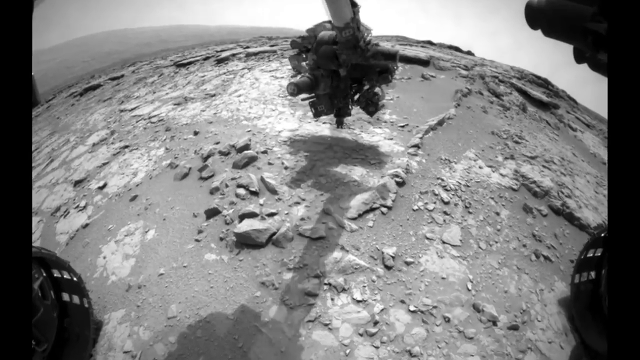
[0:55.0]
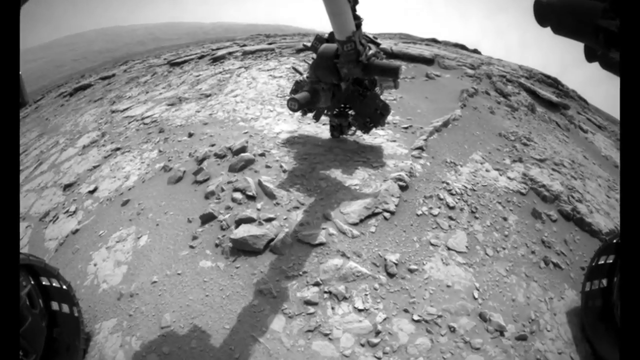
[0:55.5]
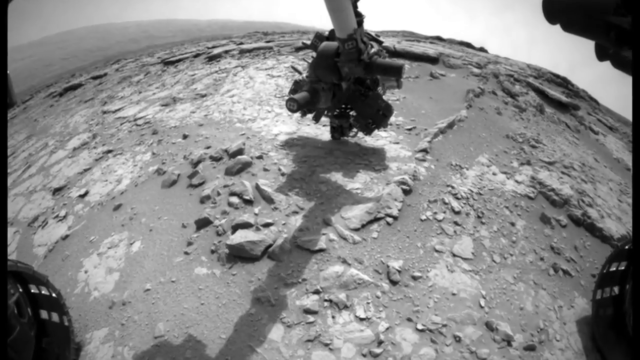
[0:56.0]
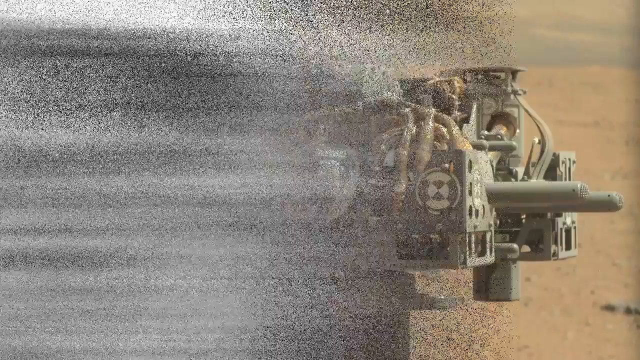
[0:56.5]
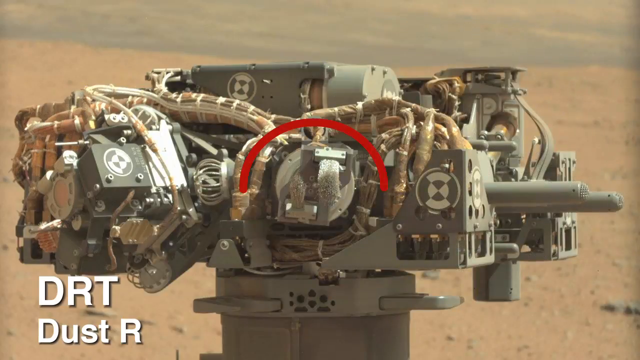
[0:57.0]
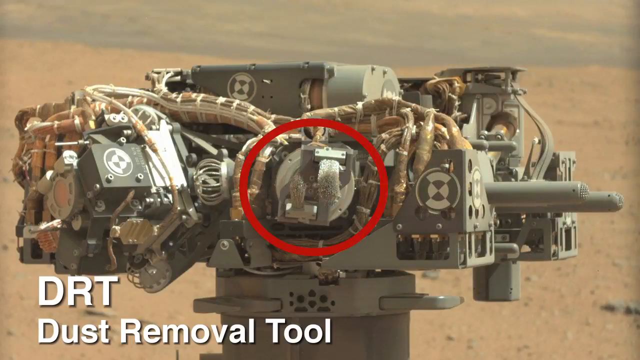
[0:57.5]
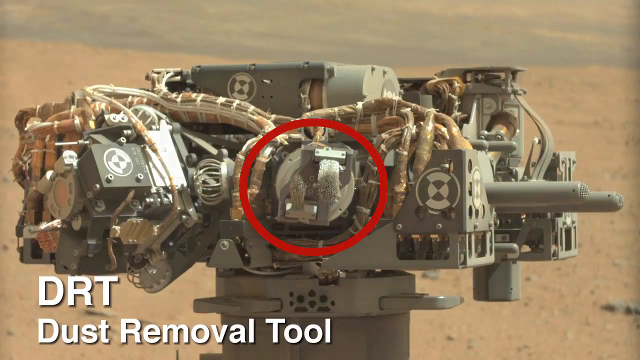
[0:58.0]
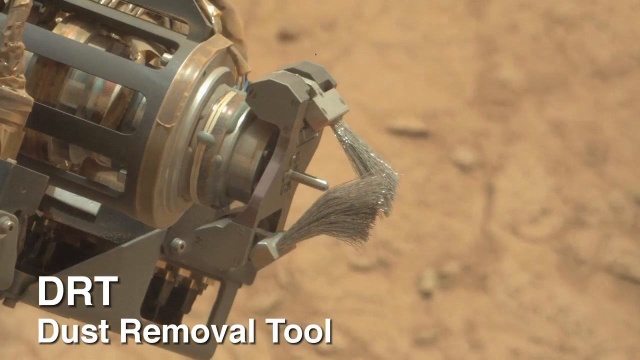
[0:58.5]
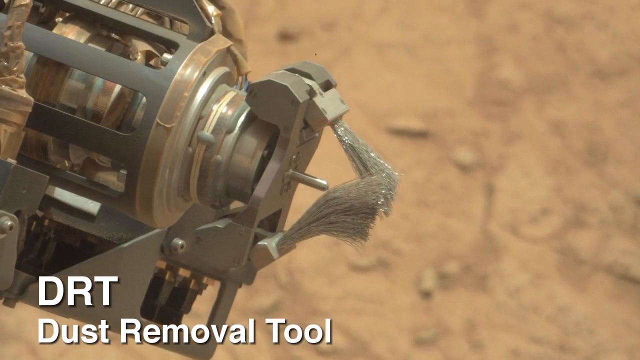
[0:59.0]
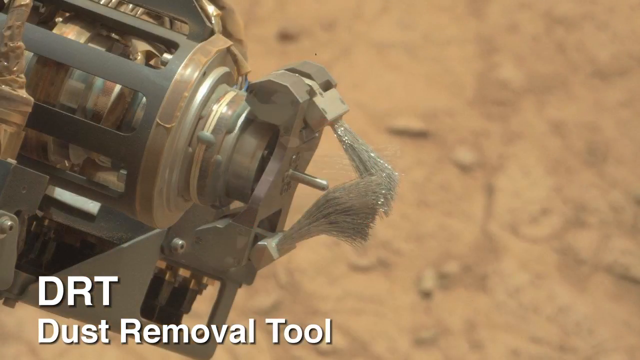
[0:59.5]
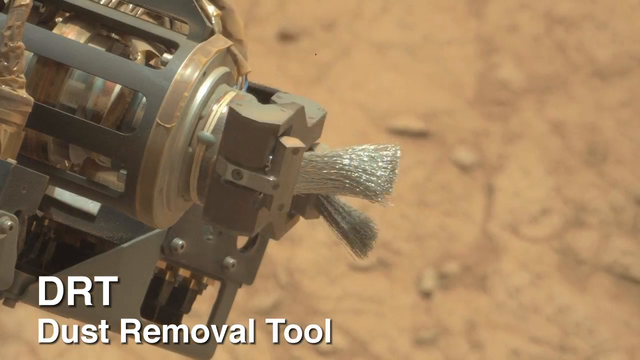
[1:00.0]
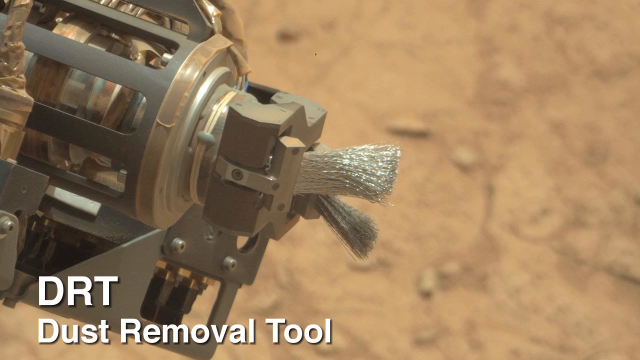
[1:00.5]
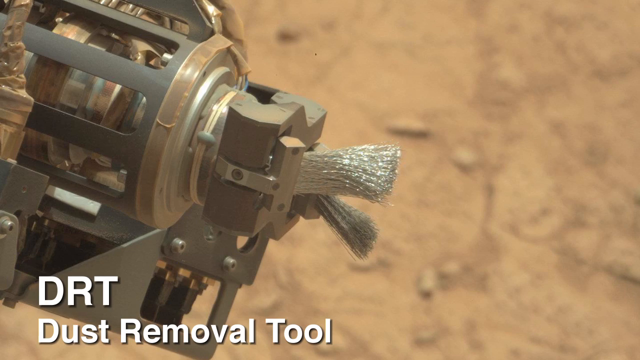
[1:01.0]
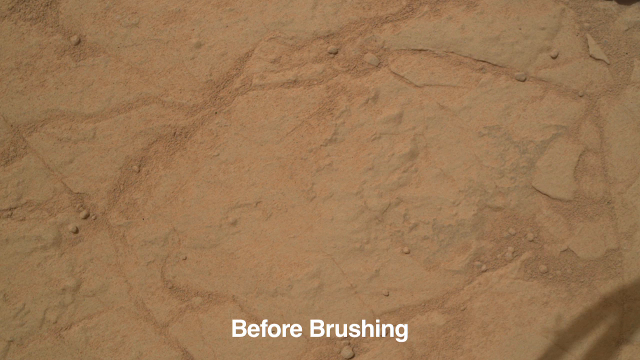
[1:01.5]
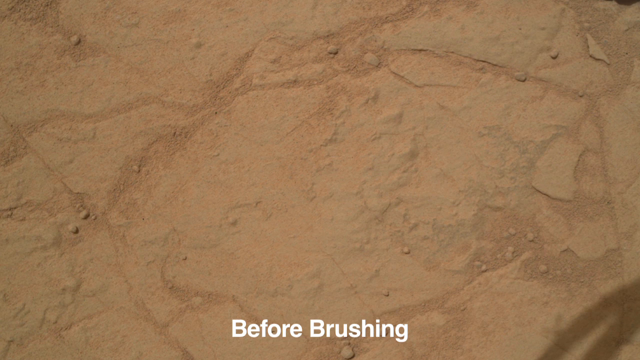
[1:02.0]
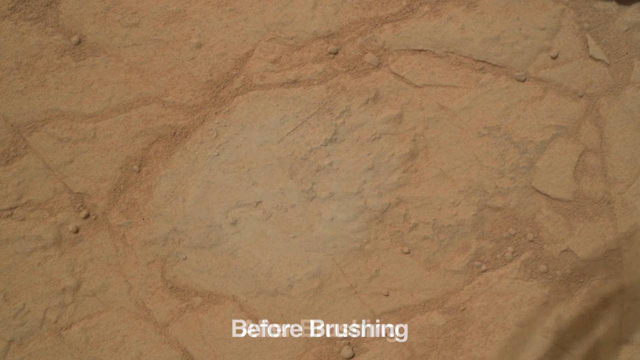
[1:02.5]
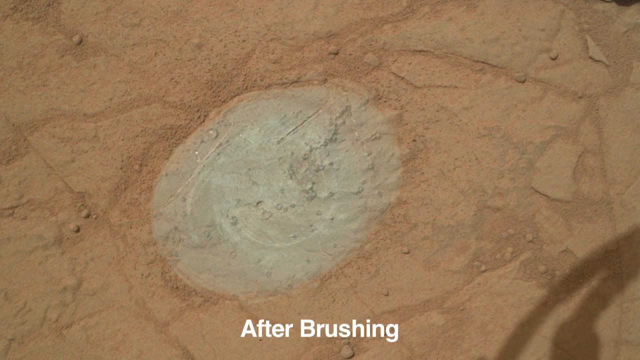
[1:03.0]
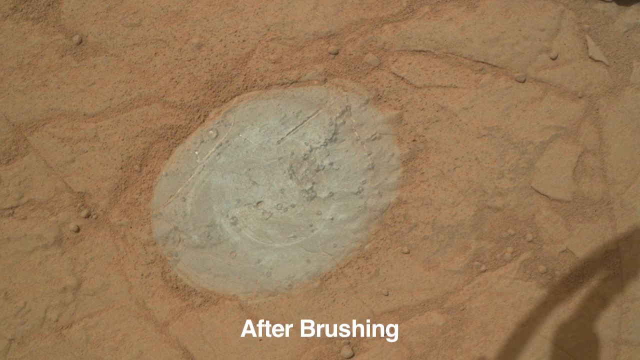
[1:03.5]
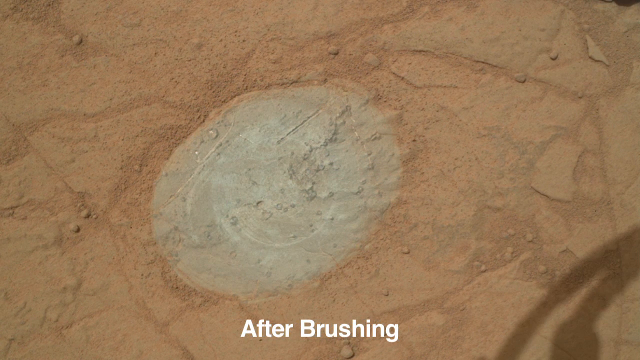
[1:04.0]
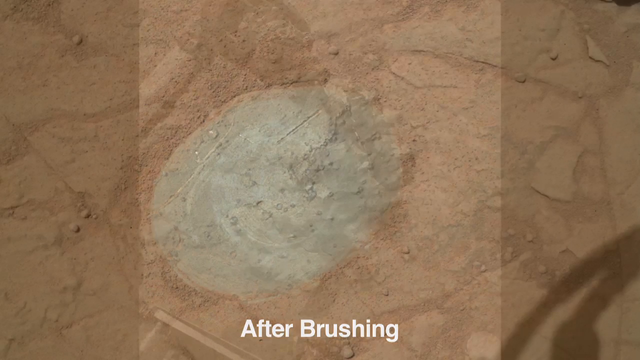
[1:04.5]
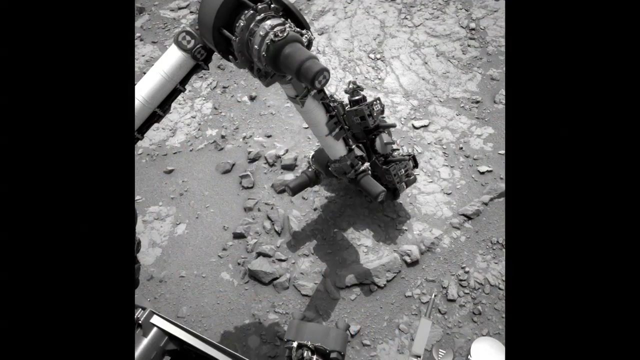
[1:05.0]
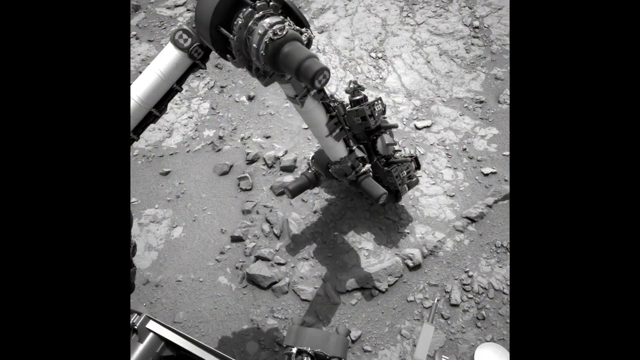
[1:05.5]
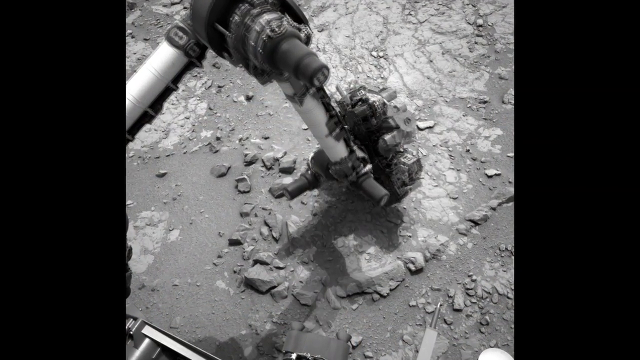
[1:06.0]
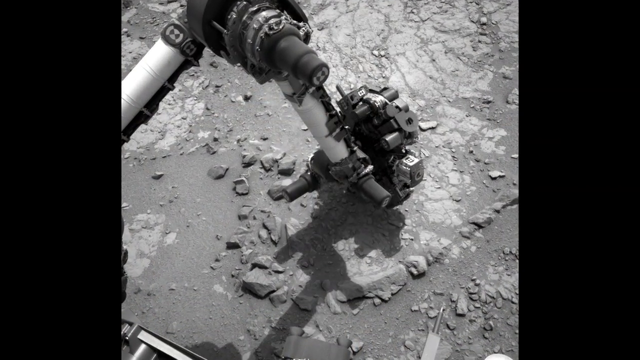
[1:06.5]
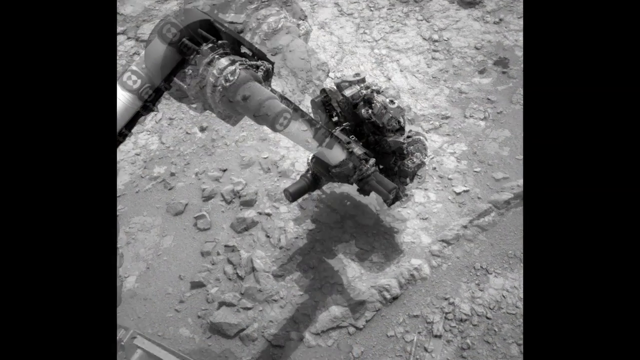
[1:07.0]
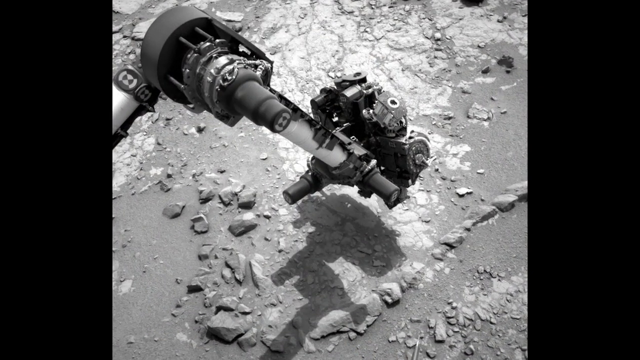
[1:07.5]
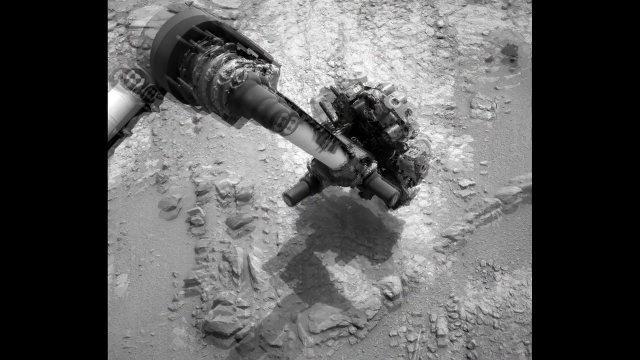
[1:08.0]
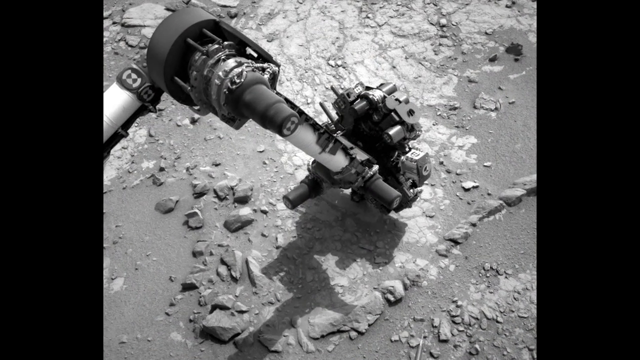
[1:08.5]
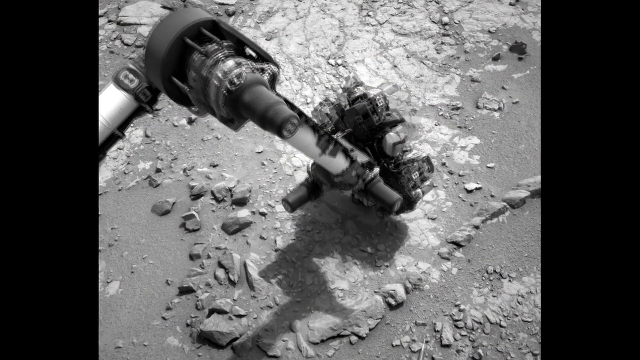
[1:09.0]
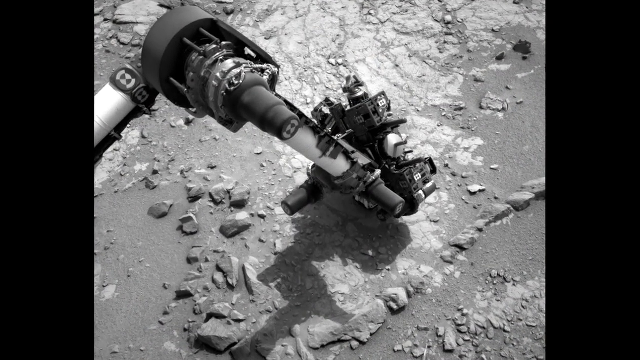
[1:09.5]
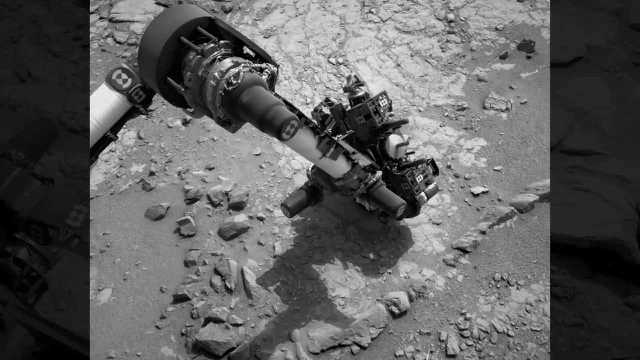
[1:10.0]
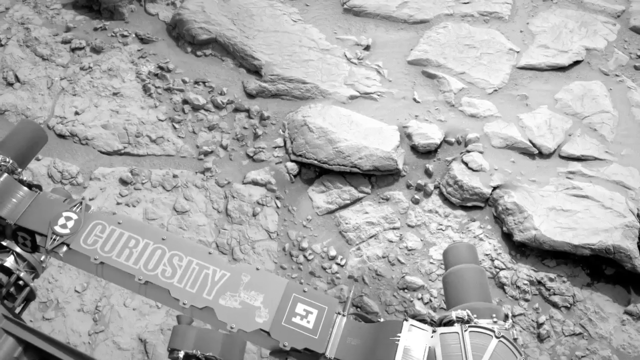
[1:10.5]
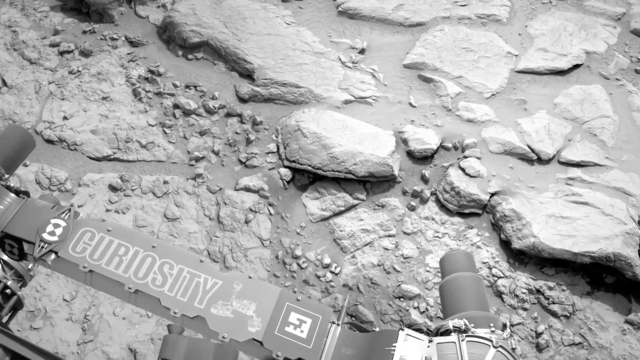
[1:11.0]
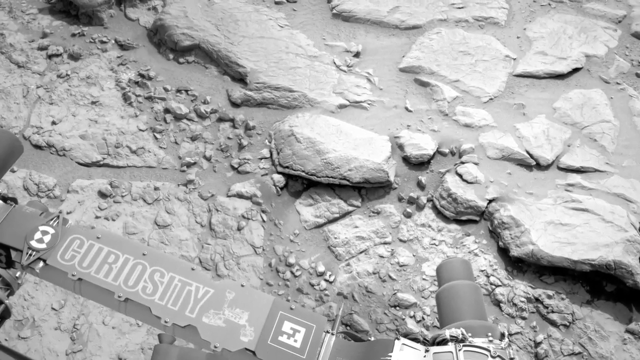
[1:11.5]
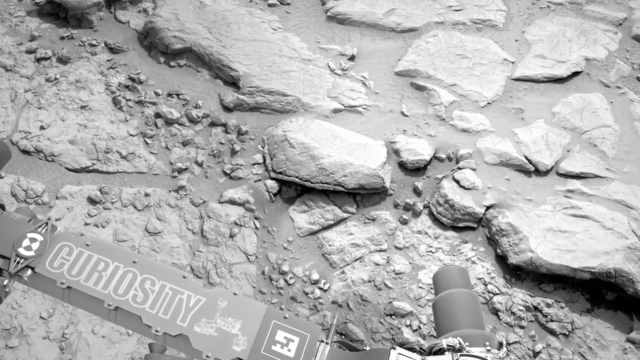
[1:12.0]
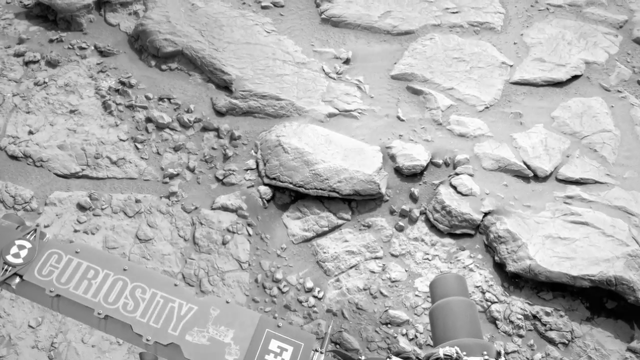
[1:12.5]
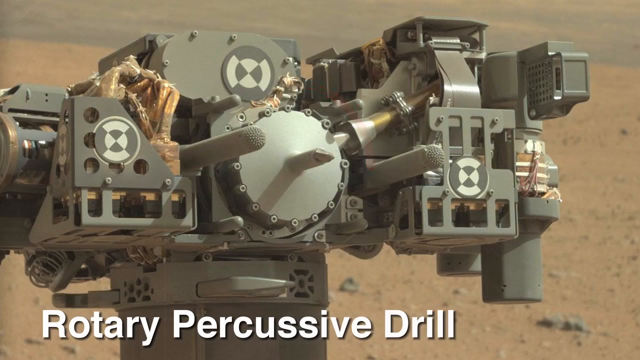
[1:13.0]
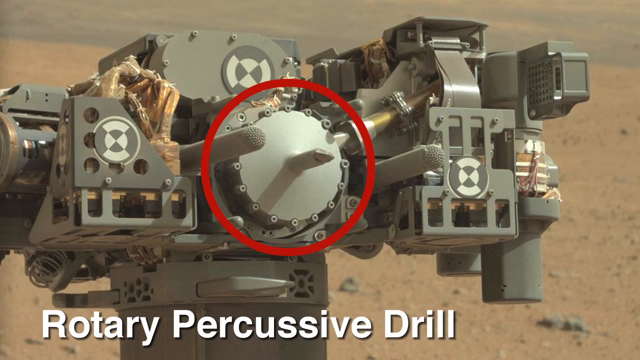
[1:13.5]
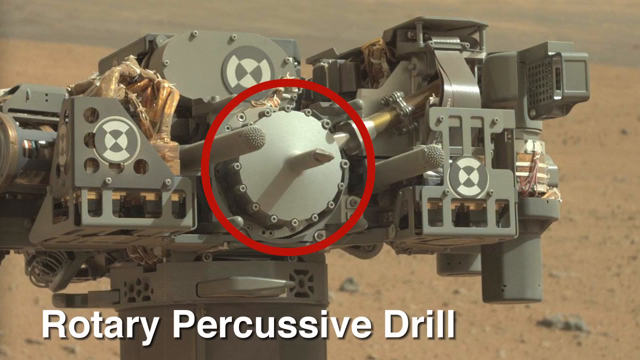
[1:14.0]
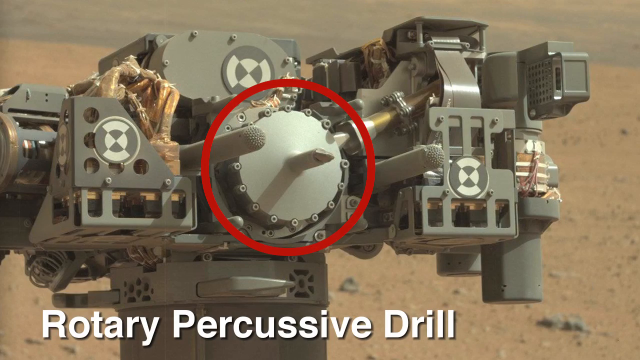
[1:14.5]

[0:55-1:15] The rover's arm, with a lot of cylinders on it, is shown. Captions appear, and part of the robot is circled and labeled "DRT", the dust removal tool. There is a logo that looks like the BMW logo. The robot has metal pieces and is connected with a lot of really thick wires. The dust removal tool is a big brush attached to motors that apparently can rotate. Text reads "before brushing" and "after brushing". The rotary percussive drill is also shown.